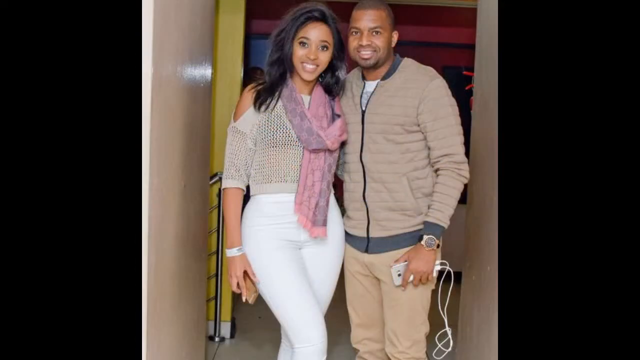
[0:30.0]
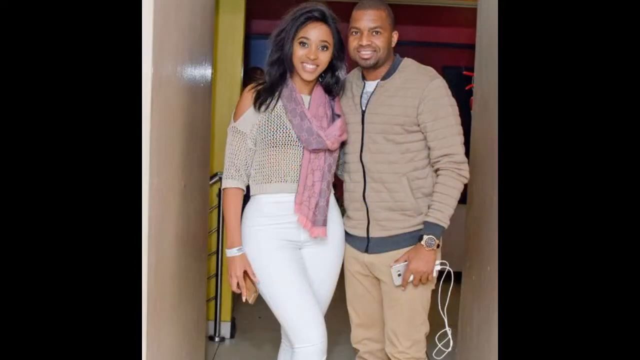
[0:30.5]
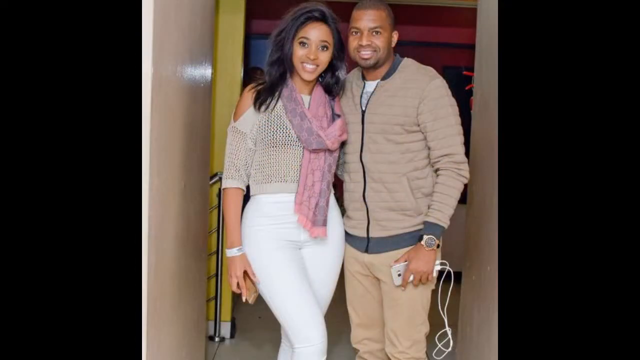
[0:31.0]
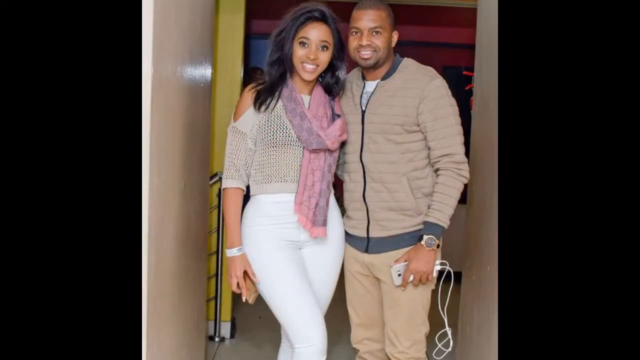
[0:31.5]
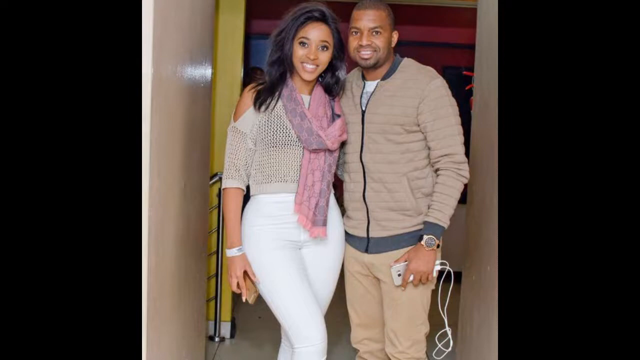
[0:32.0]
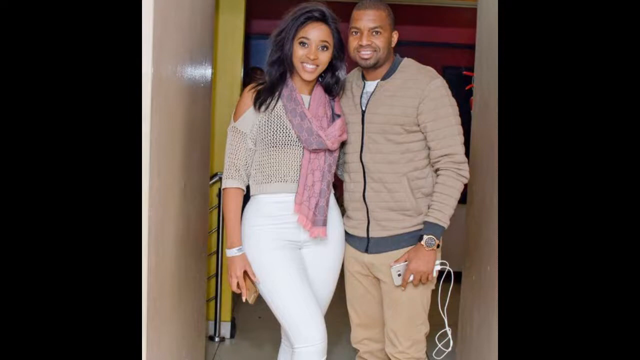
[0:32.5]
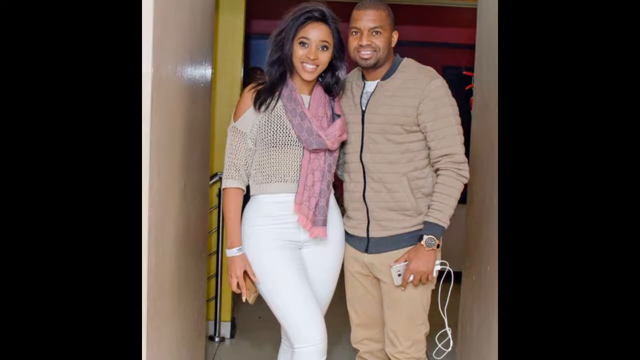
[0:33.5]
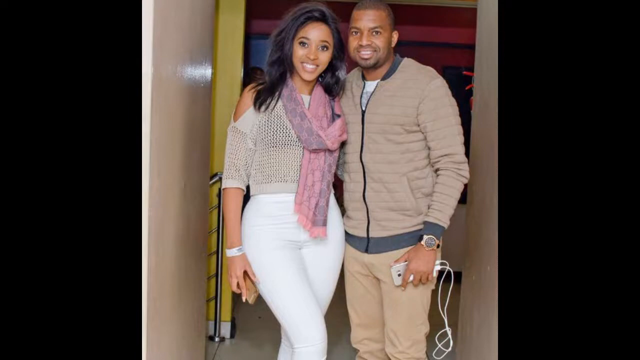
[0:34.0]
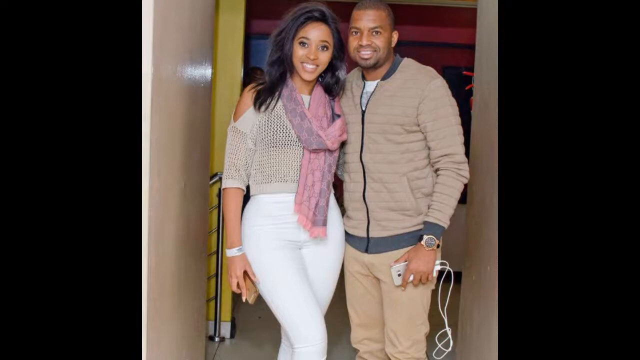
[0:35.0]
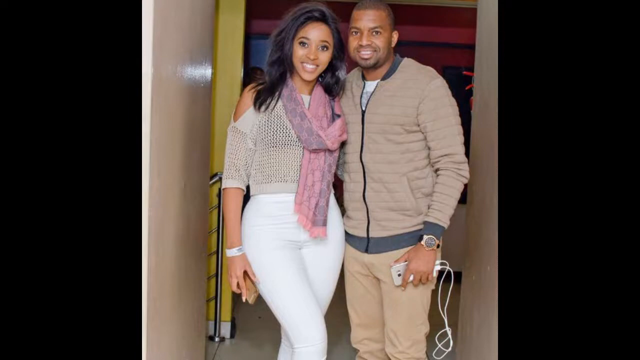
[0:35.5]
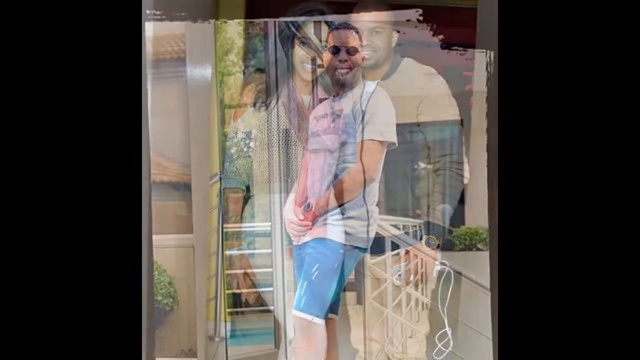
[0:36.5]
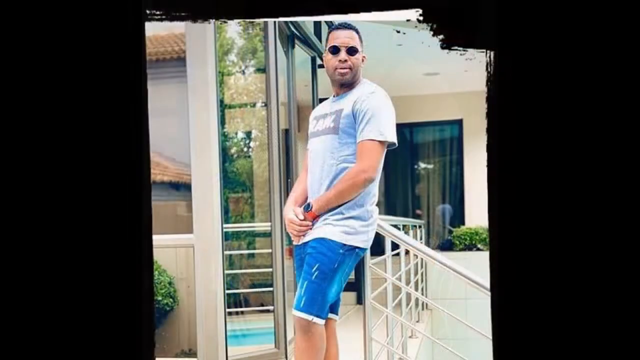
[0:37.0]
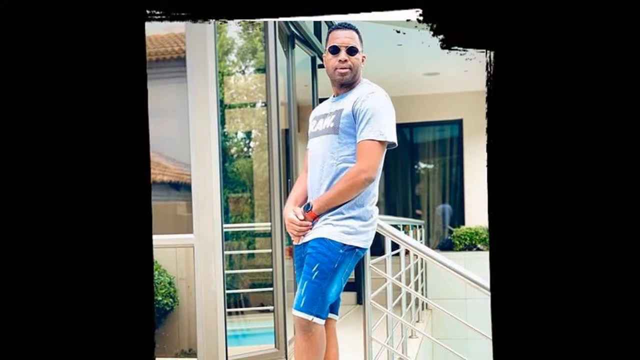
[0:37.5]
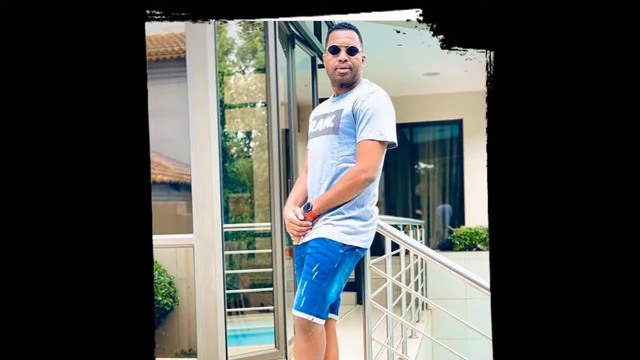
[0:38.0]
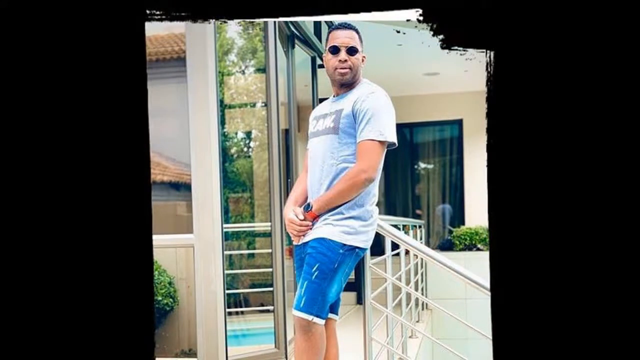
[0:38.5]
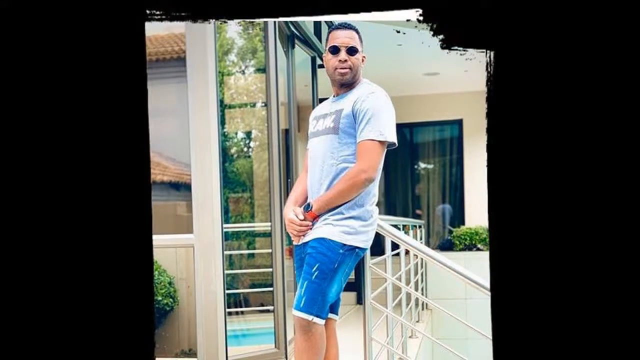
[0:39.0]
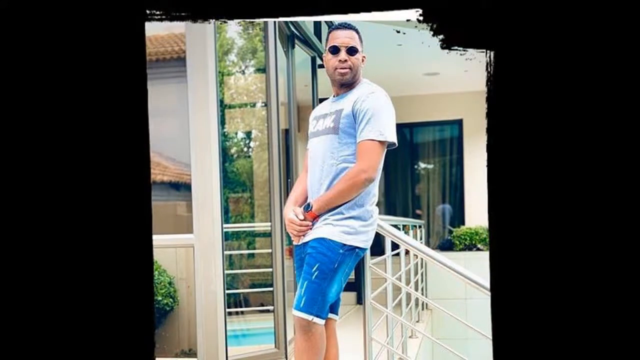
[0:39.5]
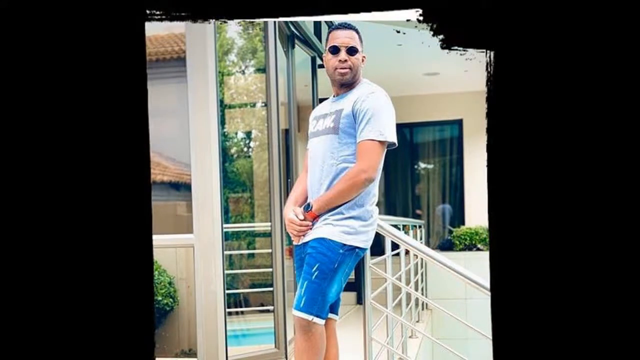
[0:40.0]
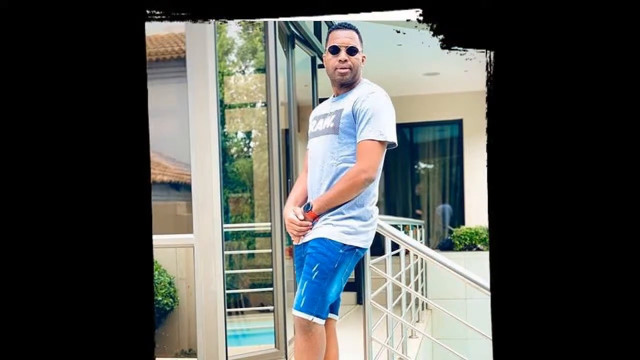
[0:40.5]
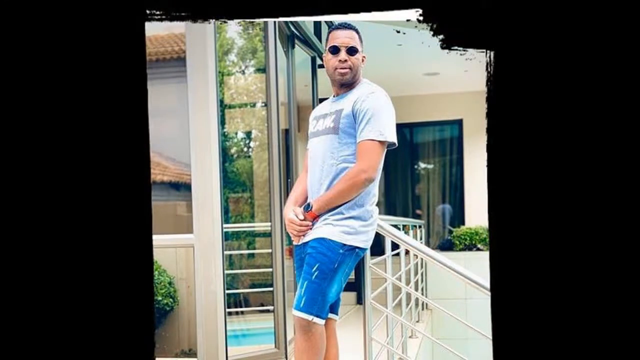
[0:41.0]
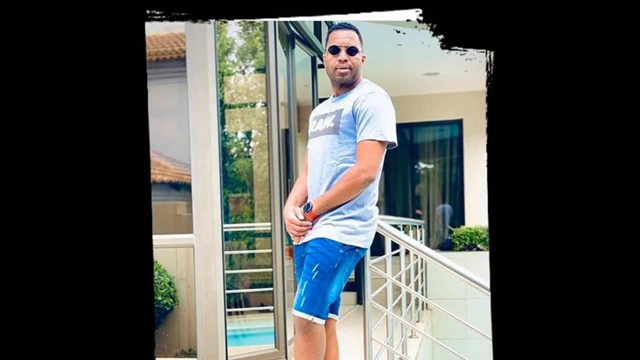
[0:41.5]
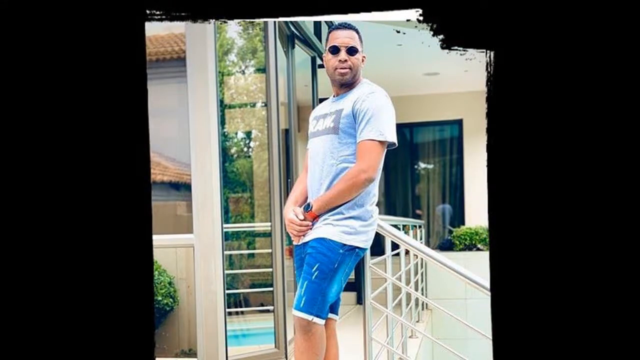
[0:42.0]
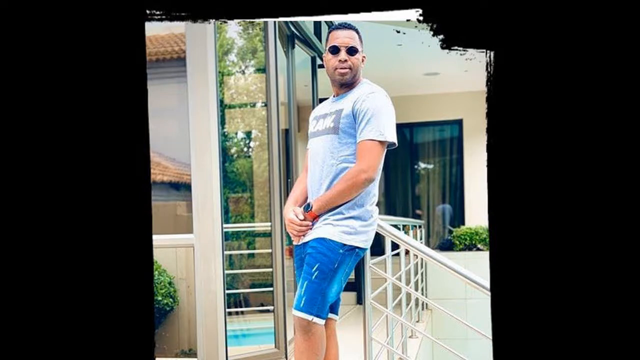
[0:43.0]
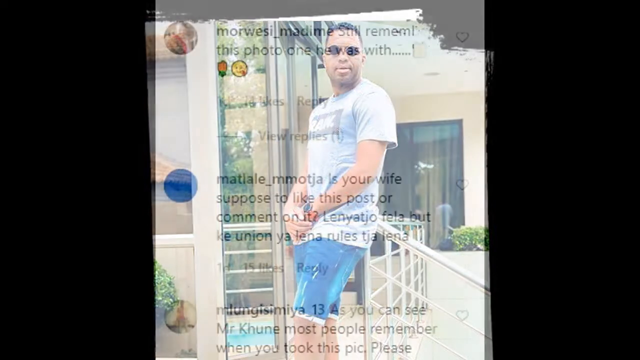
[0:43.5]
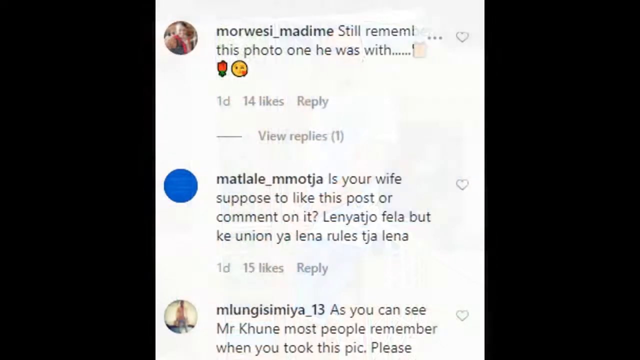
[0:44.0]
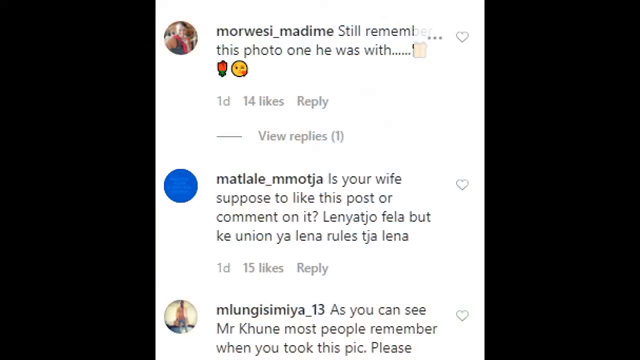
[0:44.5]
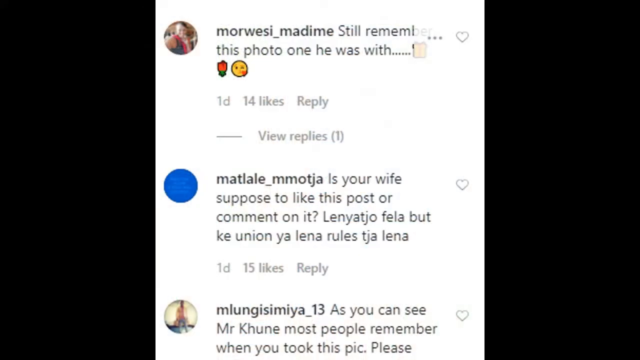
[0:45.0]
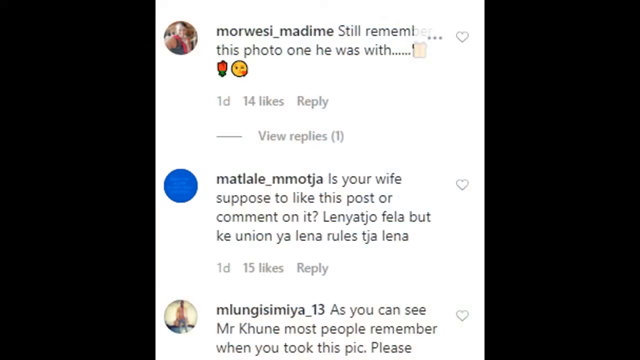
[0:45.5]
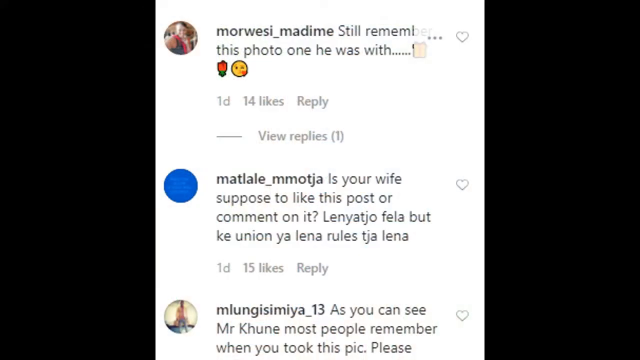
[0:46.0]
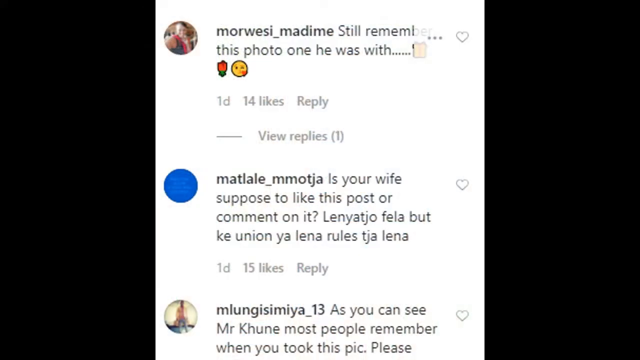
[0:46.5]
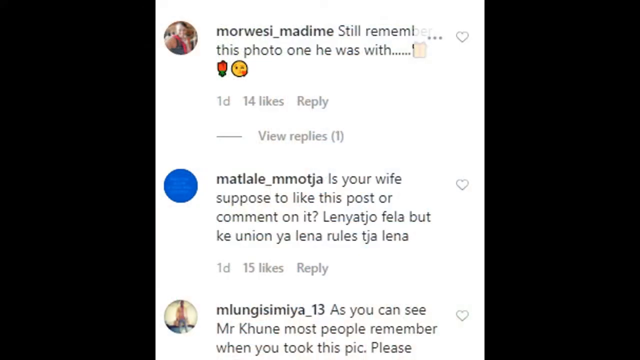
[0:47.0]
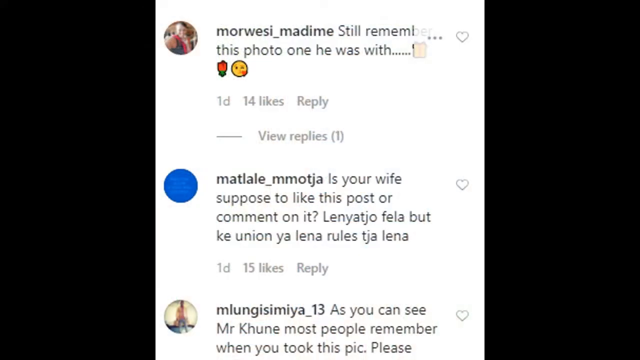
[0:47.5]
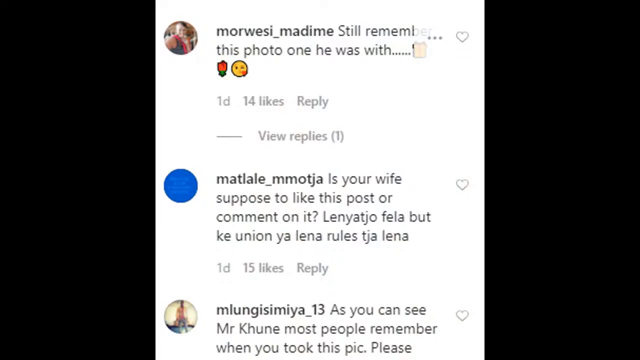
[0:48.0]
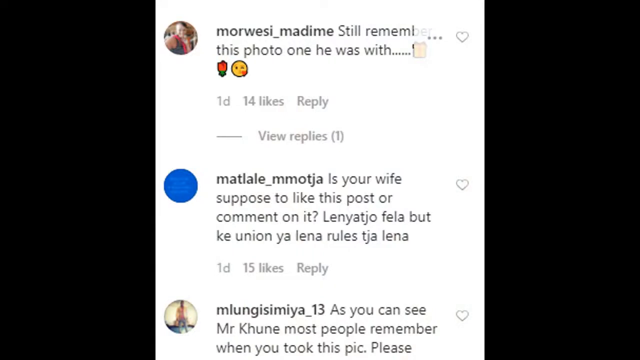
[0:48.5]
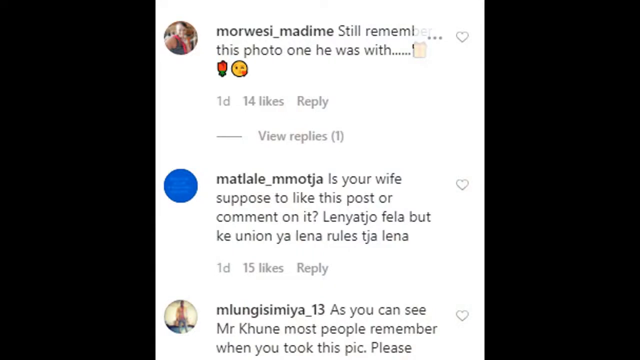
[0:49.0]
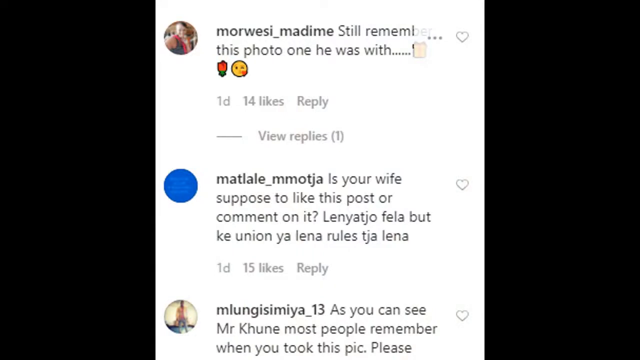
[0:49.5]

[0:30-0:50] A couple, apparently the same people seen earlier, pose for the camera in stylish clothes. The woman wears what looks like white skinny jeans and a brownish see-through top with a black bra visible underneath. She wears a watch on her right hand and a scarf around her neck that looks pinkish with some black, and she wears what looks like a frontal wig resembling human hair. The man wears khaki trousers and a khaki jacket with some black on it; he holds a phone and a charger and also wears a watch. Both are smiling, and they appear to be standing at an entrance or by a door.